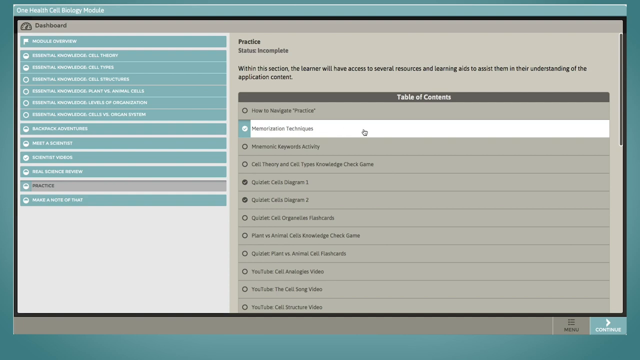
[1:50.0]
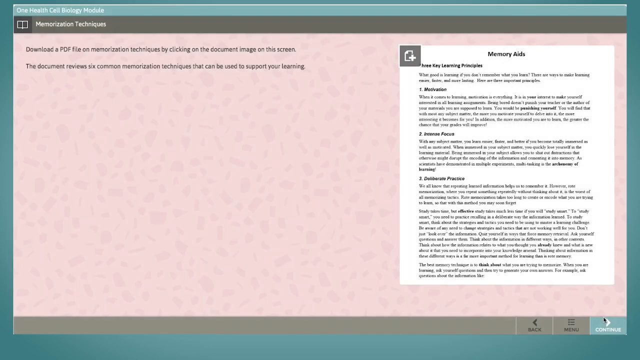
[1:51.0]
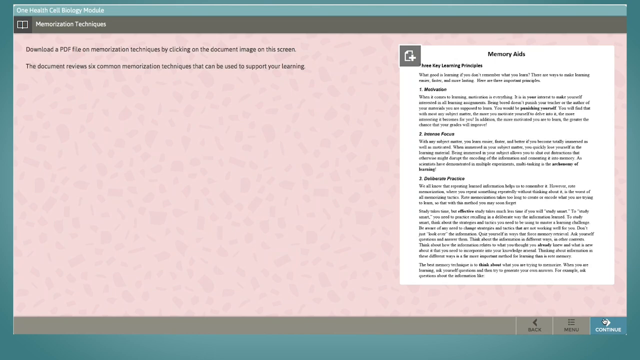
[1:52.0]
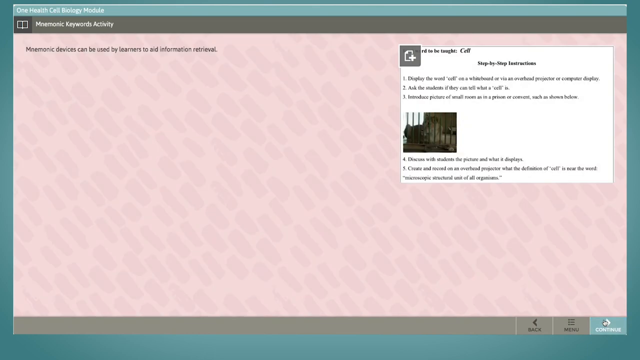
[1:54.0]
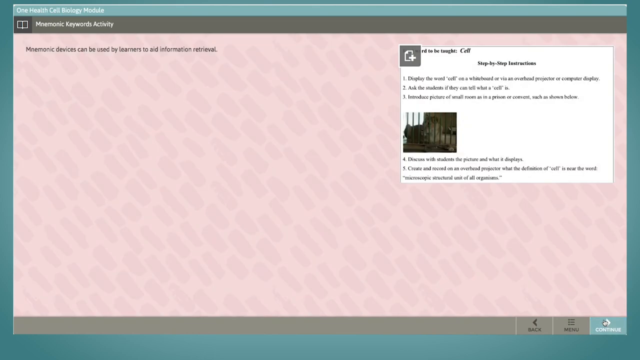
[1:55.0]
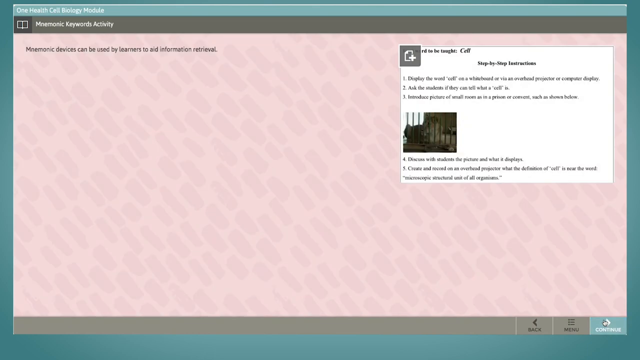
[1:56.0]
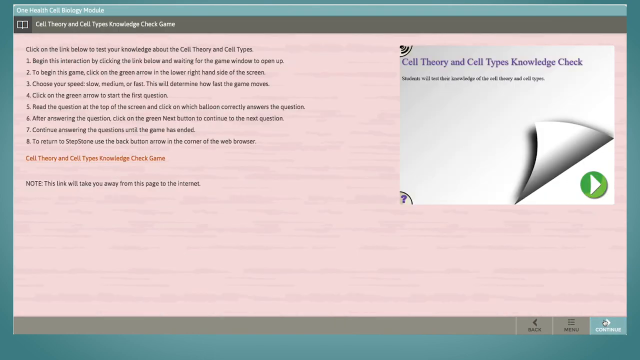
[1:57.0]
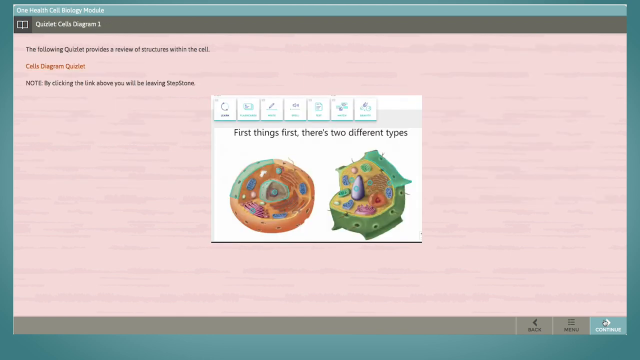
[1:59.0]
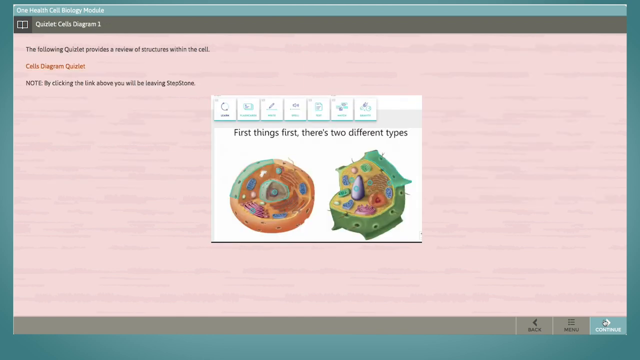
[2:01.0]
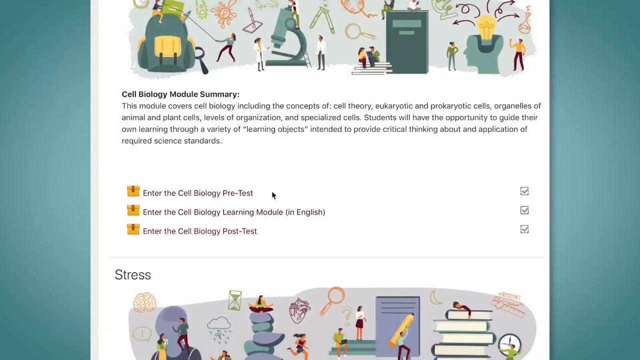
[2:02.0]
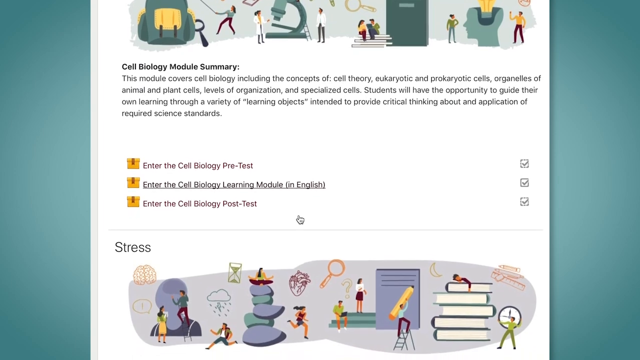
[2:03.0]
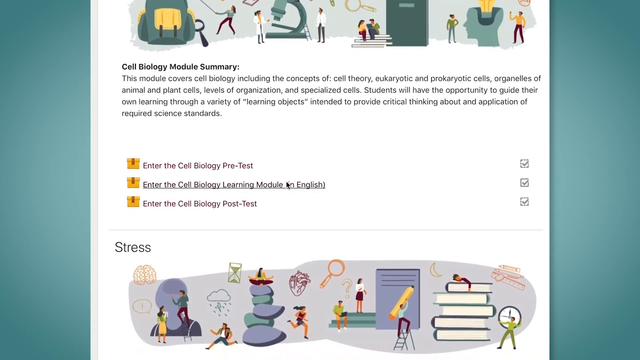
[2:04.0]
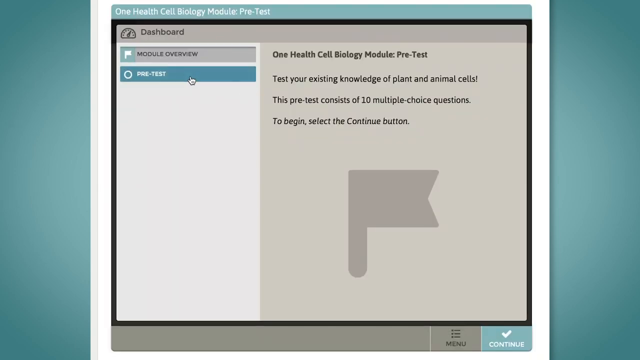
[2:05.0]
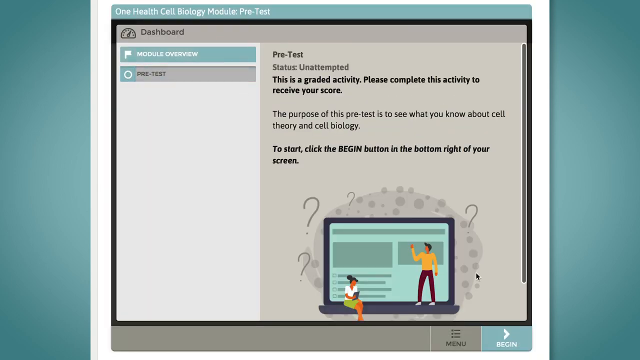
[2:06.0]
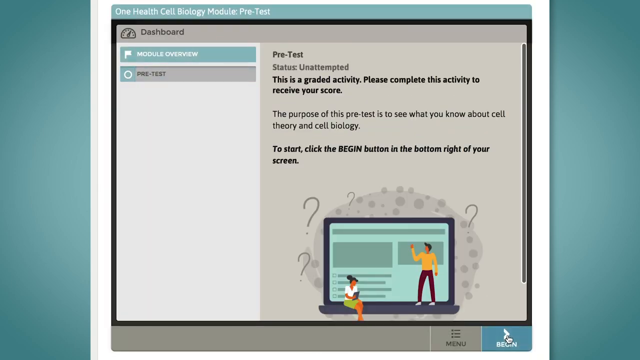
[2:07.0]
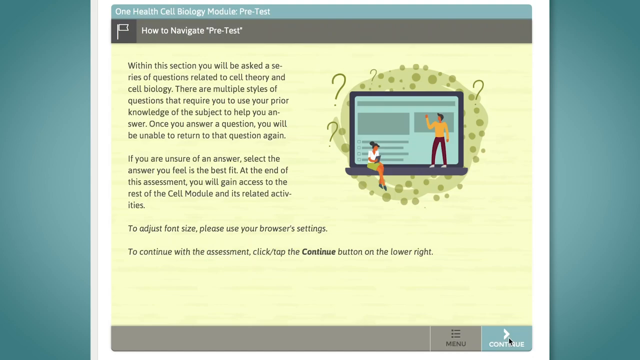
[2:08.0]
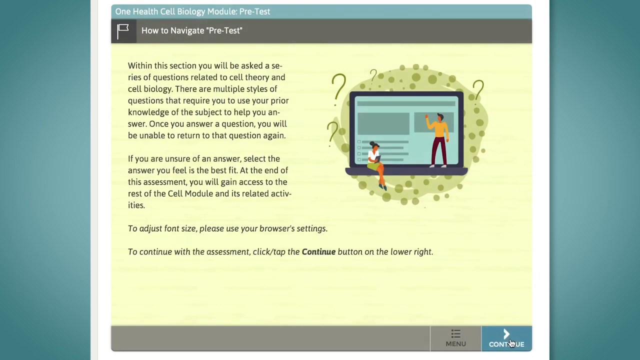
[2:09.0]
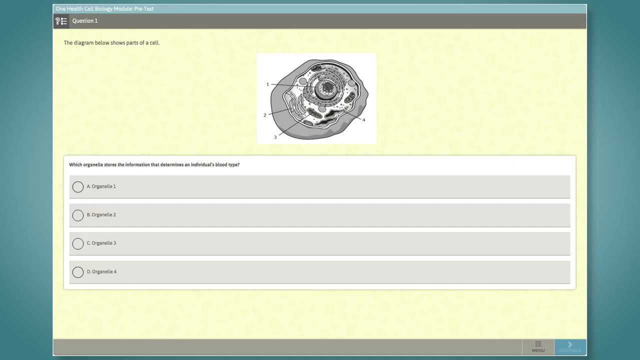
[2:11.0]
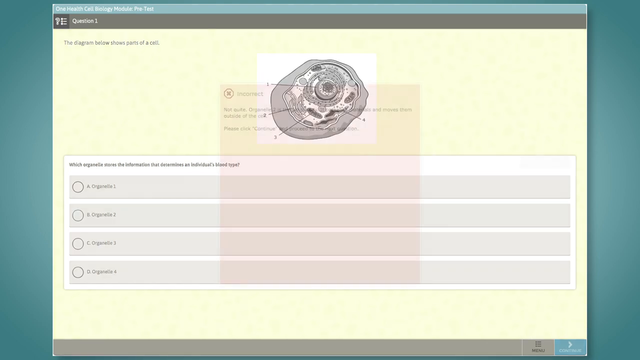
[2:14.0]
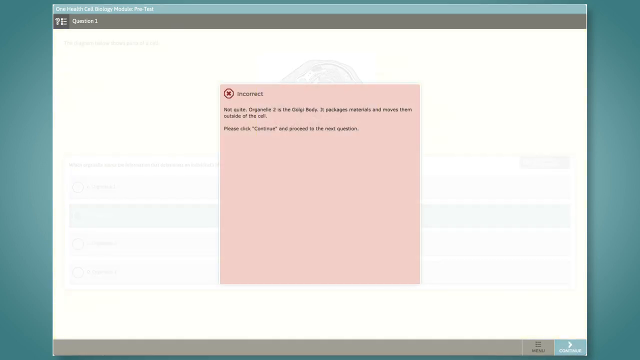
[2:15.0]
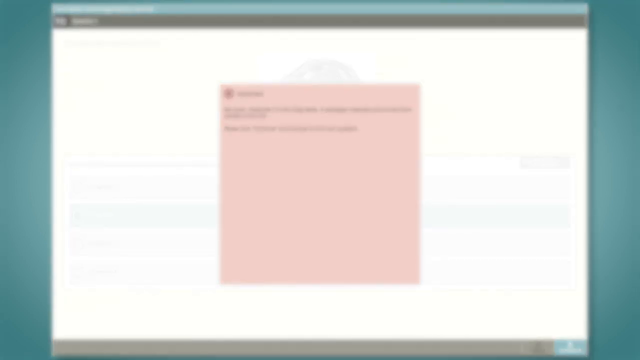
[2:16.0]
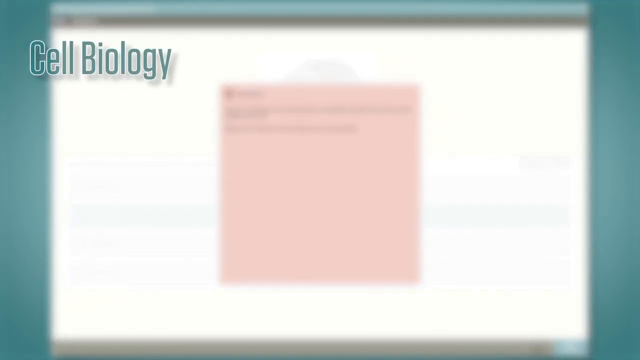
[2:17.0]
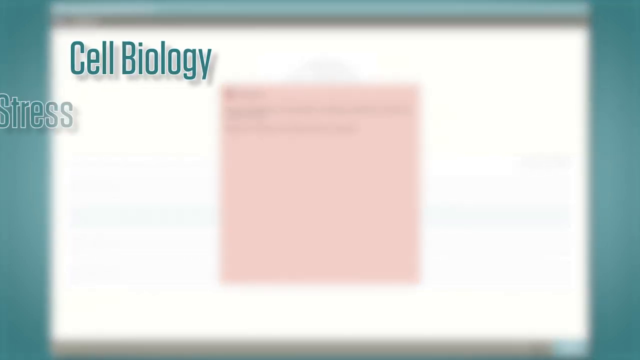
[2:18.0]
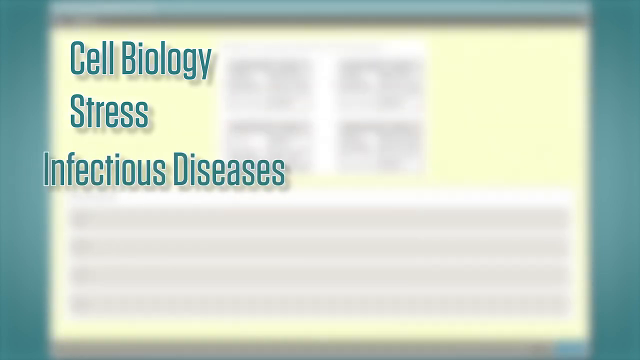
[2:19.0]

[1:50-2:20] A cursor scrolls through a page of the One Health Cell Biology module and chooses a tab, Memorization Techniques. That page shows, on a light pink background, a PDF image of a paper on the right with a white background and black text, titled "Memory Aids". Text to the left says "download a PDF file on Memorization Techniques by clicking on the document image on this screen. The document reviews six common memorization techniques that can be used to support your learning." The page changes to one titled "Mnemonic Keywords Activity" with the text "Mnemonic devices can be used by learners to aid information retrieval" and, on the right, an inset image titled "Step-by-Step Introduction". Next comes a page called "Cell Theory and Cell Types Knowledge Check Game", then "Quizlet Cells Diagram 1", then a white page. Scrolling leads back to the module and a pretest, which shows diagrams of parts of a cell. Question one is answered incorrectly. The words "cell biology", "stress" and "infectious diseases" pop up on the screen.